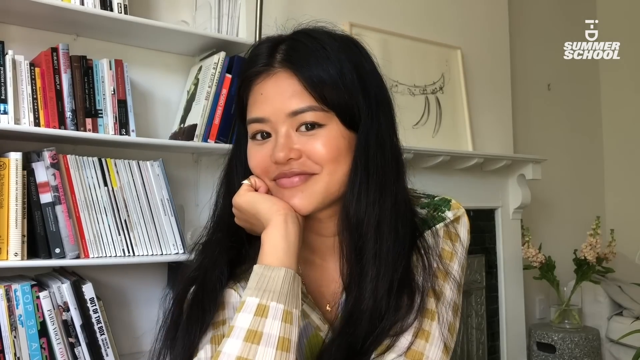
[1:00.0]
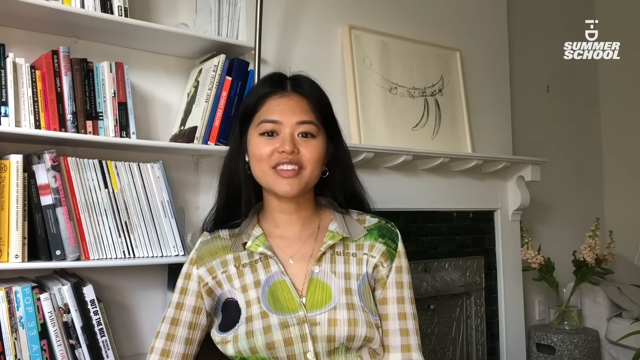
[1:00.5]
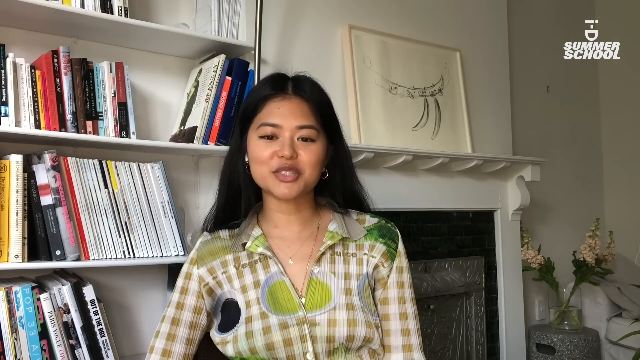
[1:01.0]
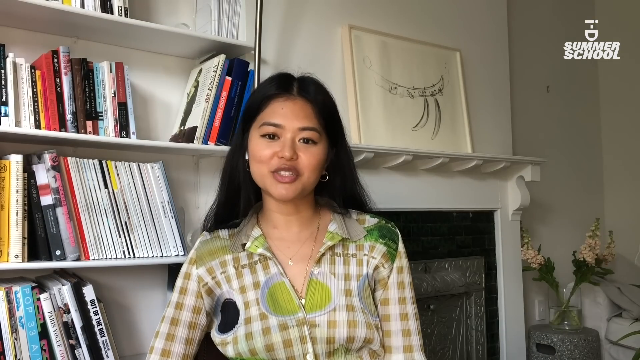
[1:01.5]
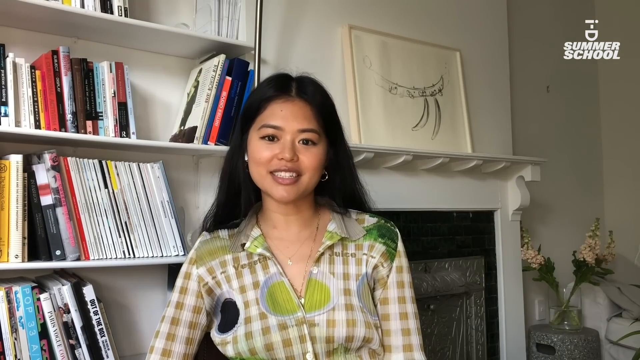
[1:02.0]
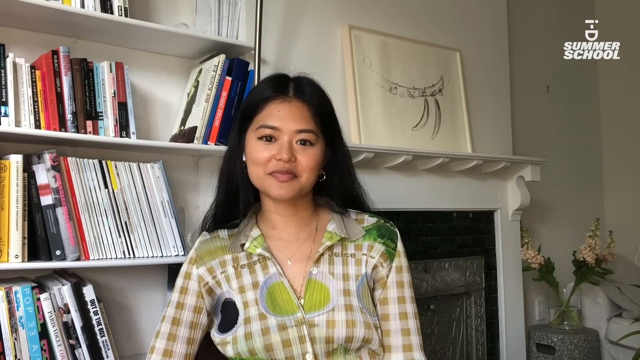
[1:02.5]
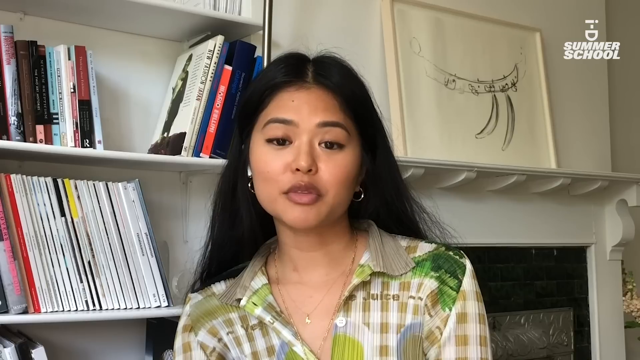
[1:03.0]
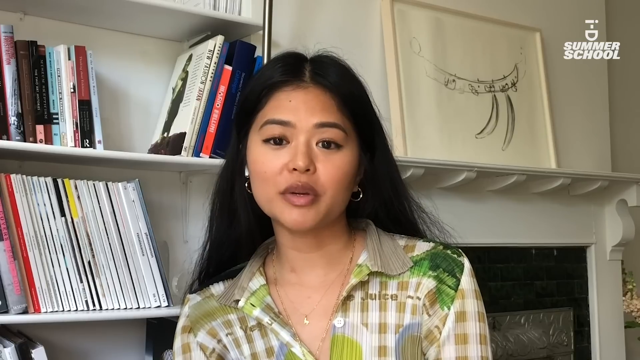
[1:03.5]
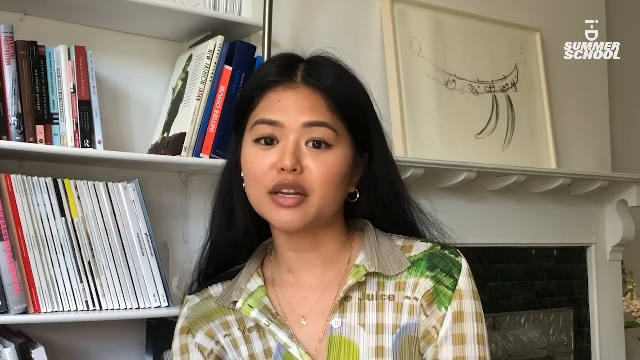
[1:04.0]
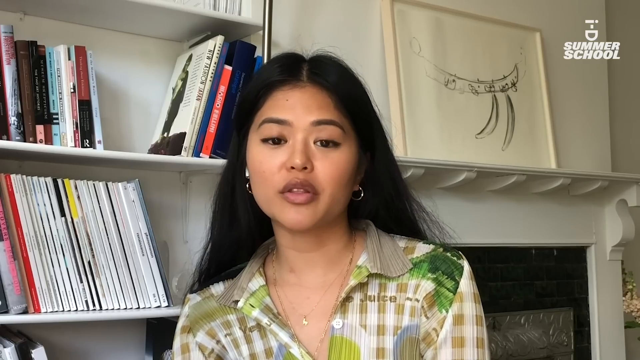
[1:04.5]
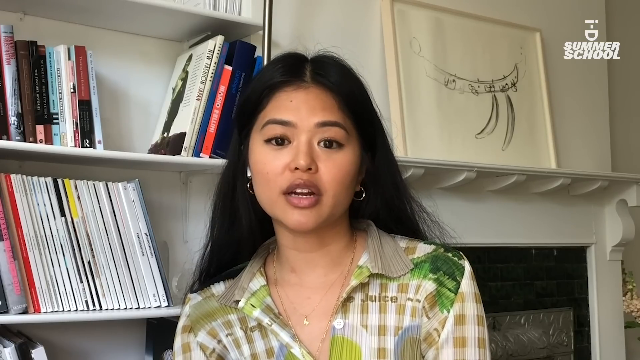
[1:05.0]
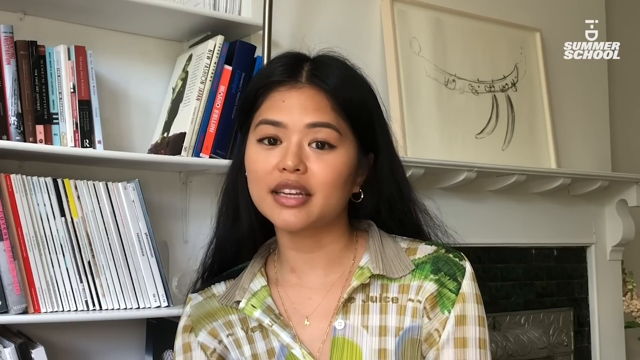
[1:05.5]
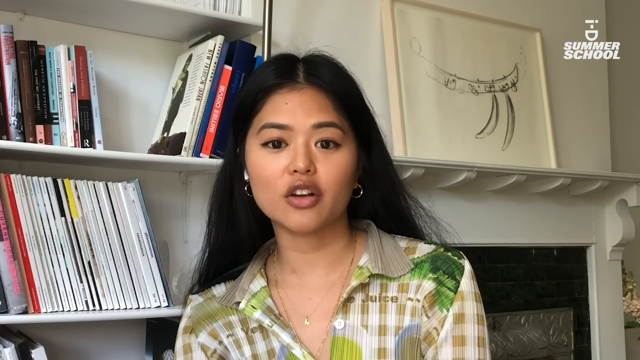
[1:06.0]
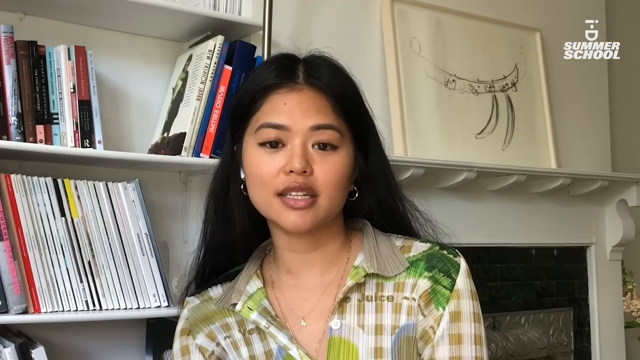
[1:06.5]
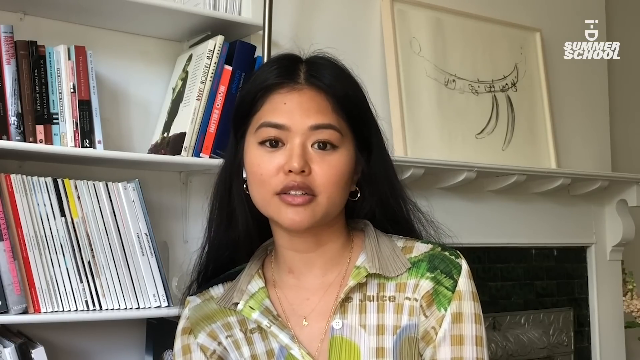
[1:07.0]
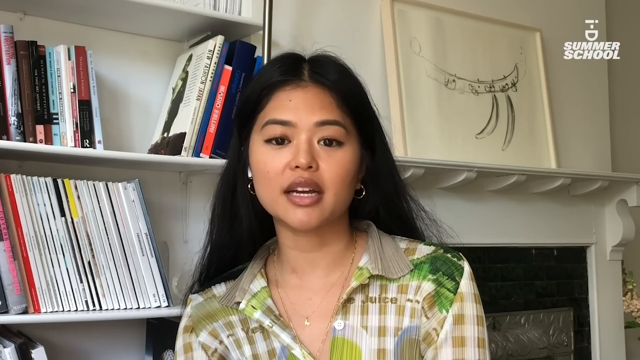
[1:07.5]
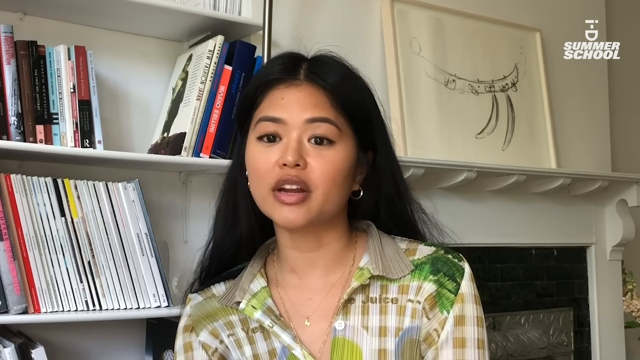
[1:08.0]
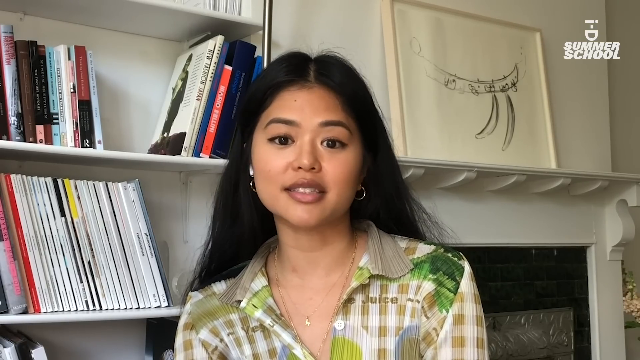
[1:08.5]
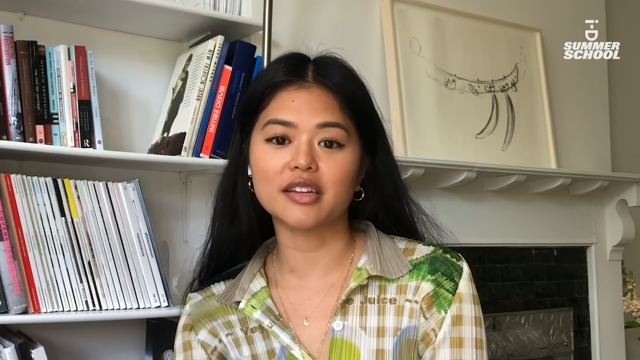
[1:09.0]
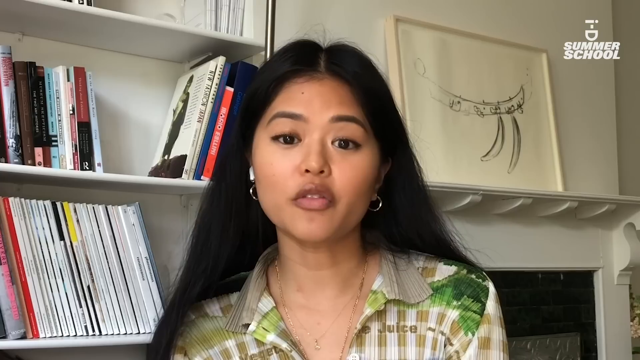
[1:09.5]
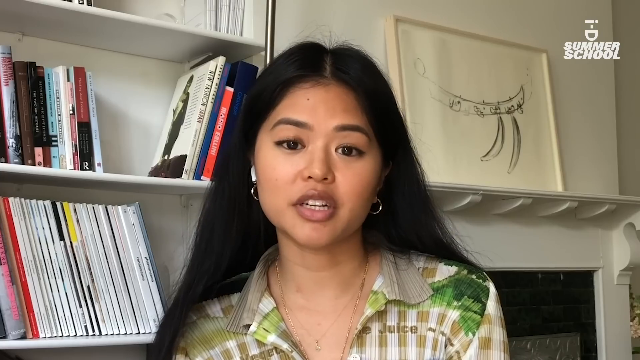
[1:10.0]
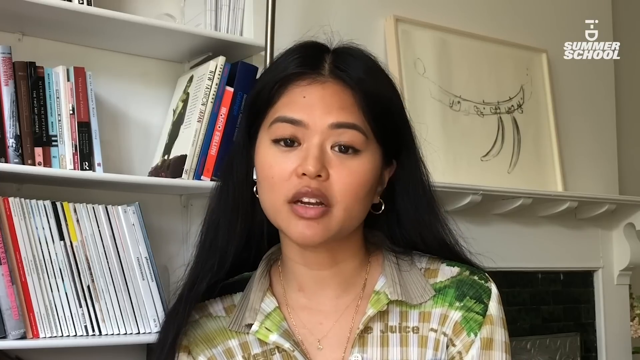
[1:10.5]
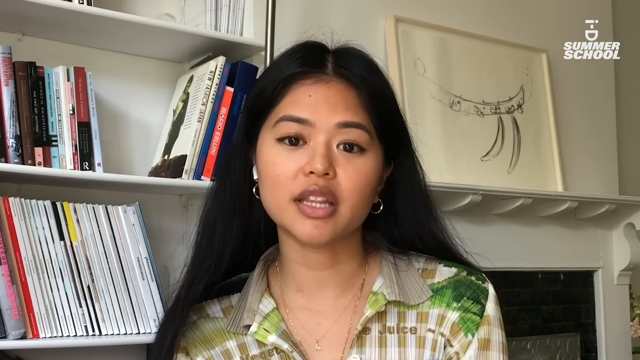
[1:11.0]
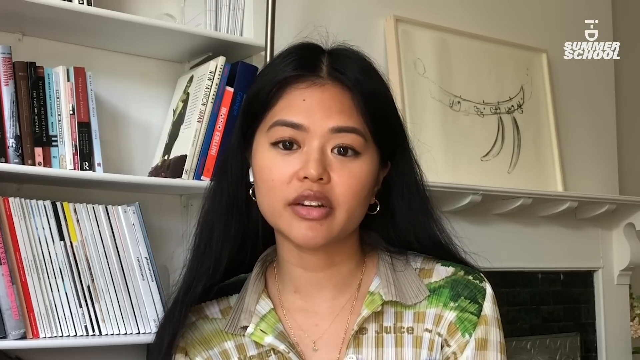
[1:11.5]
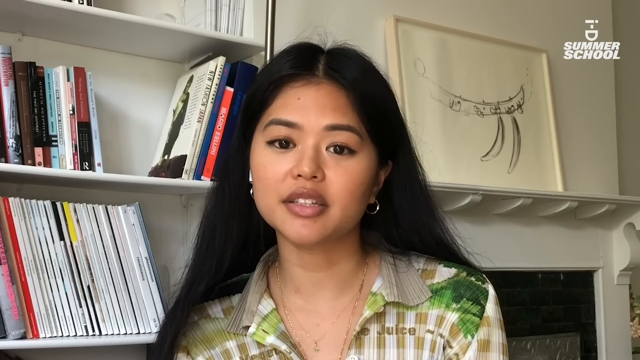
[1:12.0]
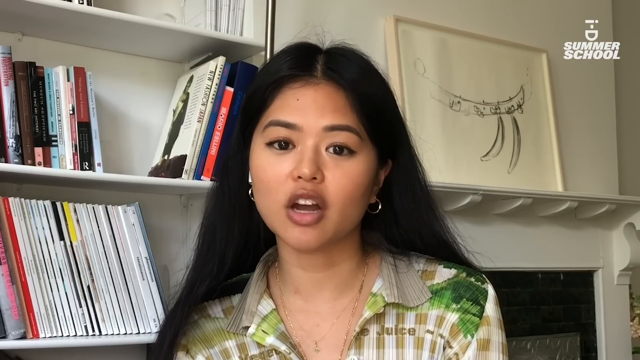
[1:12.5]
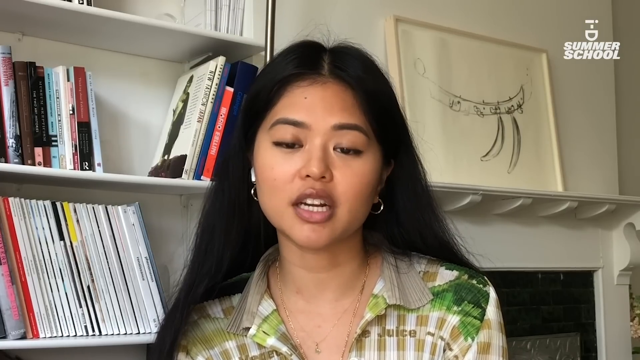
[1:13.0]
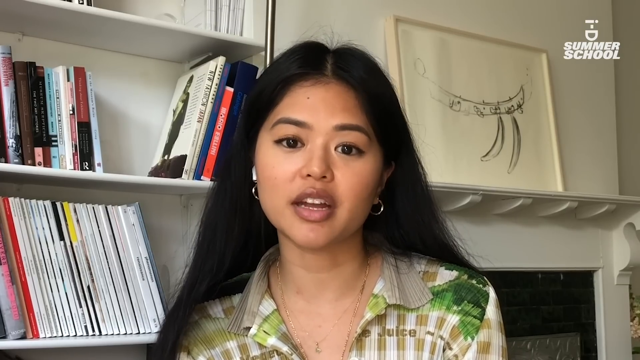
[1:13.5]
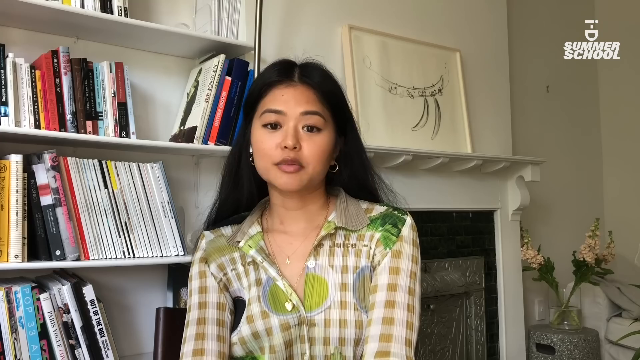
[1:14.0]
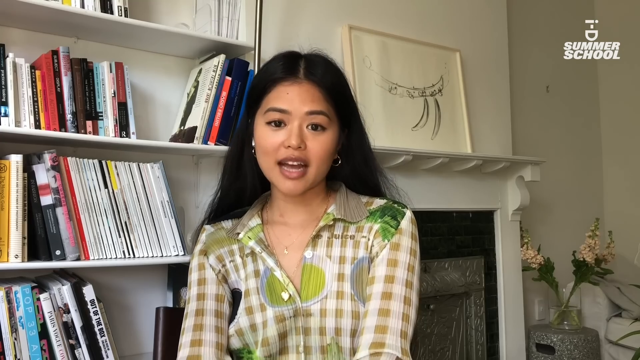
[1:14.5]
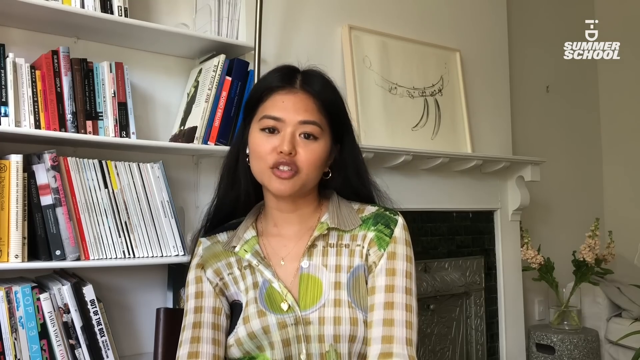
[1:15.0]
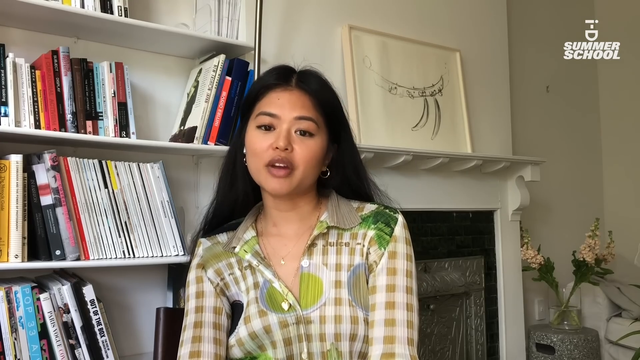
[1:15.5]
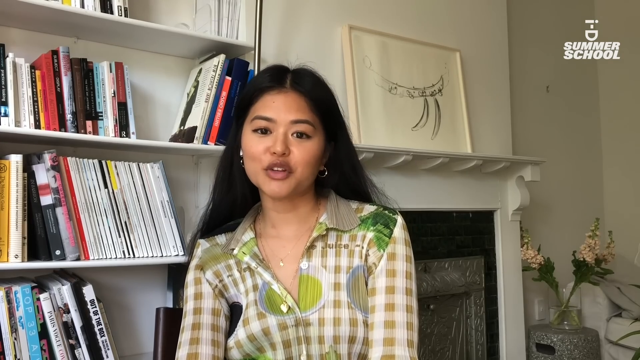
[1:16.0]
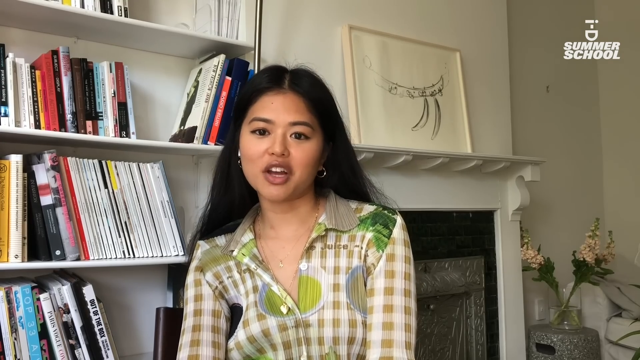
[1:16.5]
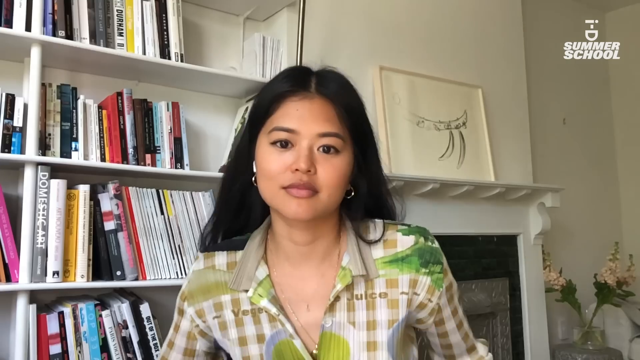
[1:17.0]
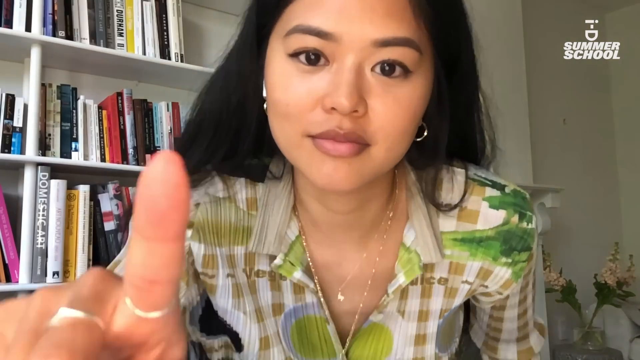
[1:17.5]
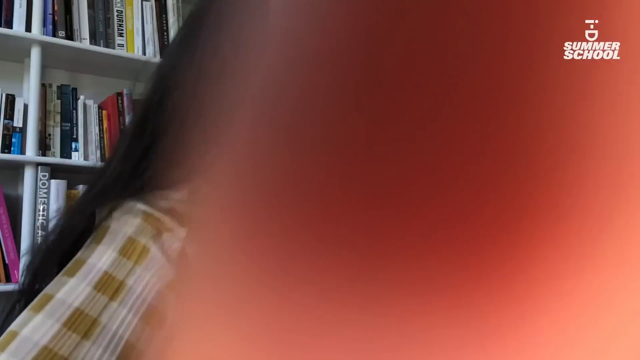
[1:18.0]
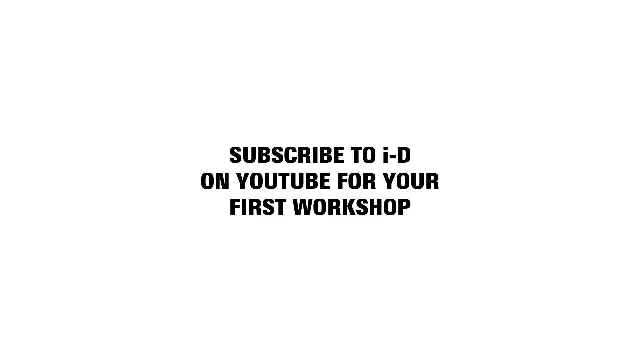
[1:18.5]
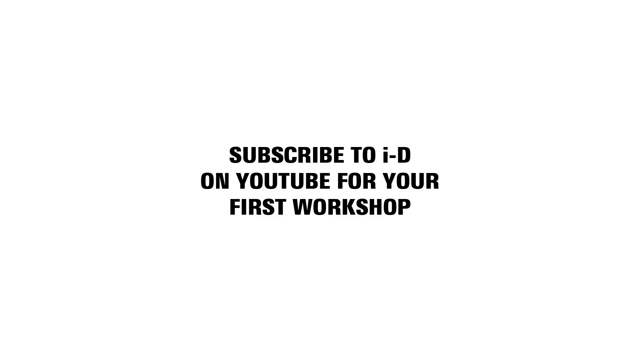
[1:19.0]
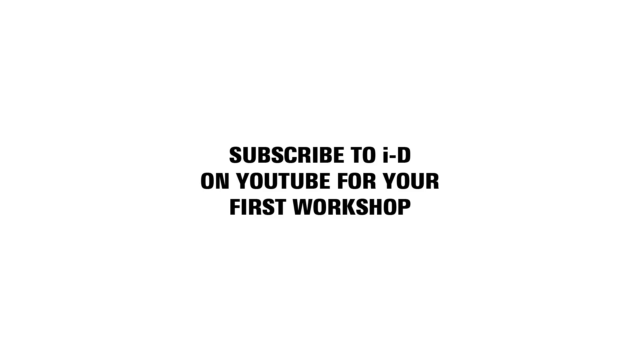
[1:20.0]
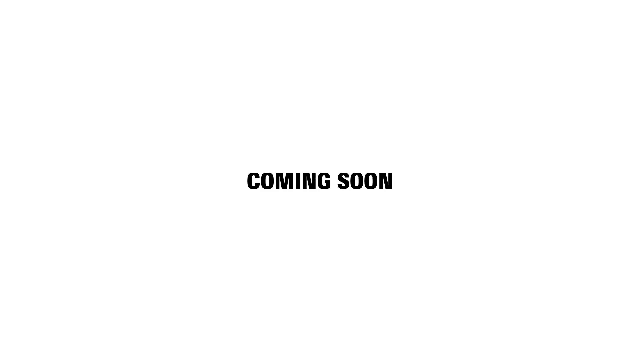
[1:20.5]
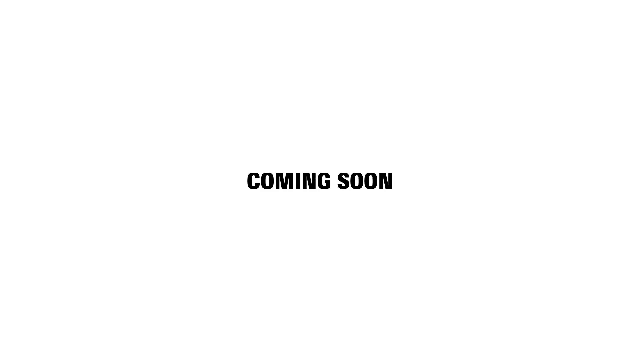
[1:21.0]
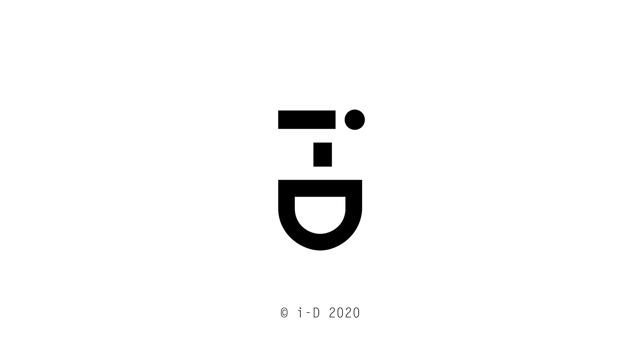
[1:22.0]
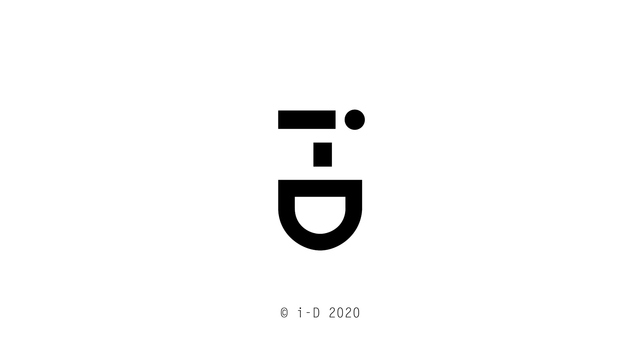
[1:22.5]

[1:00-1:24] An Asian woman speaks into the camera, wearing two big silver hoop earrings and a long-sleeve button-up shirt checkered in cream and olive. Behind her to the left is a bookshelf with three shelves, all holding books. Behind her to the right is a fireplace with a shelf above it, and above that shelf is a frame with a piece of art in it. She stands up from a sitting position, gets really close to the camera while looking into it, and puts her index finger right into the camera. In the upper right corner, written in black, are the words "SUMMER SCHOOL." The video then cuts to a solid white screen reading "subscribe to ID on YouTube for your first workshop."